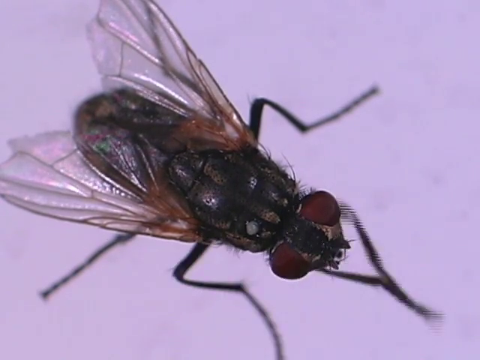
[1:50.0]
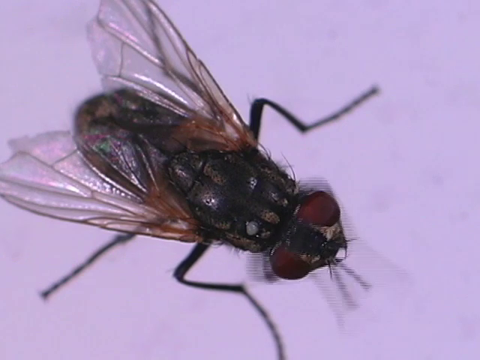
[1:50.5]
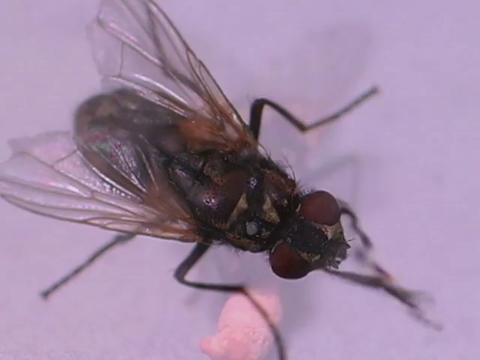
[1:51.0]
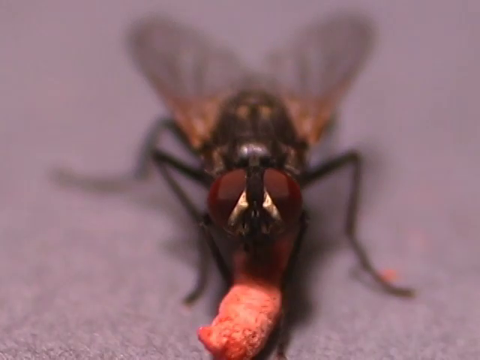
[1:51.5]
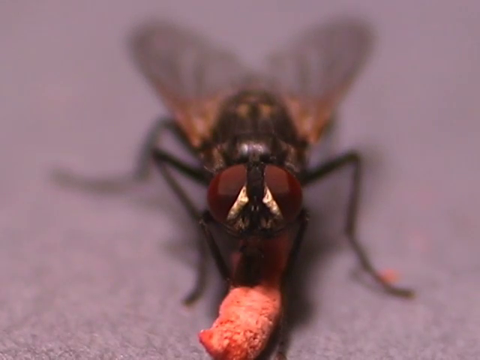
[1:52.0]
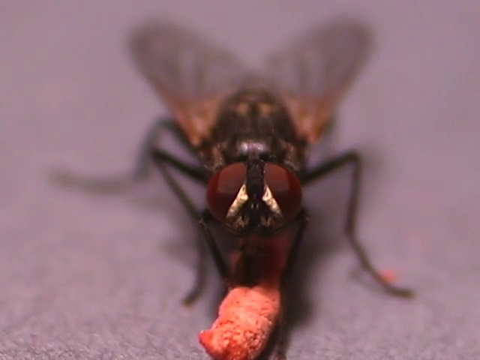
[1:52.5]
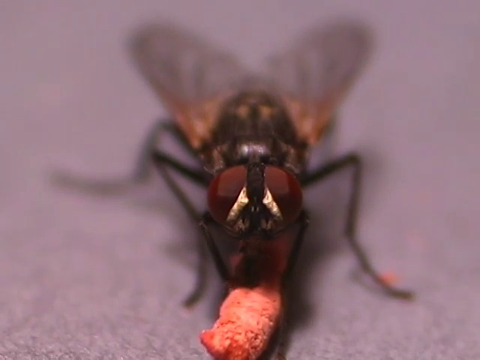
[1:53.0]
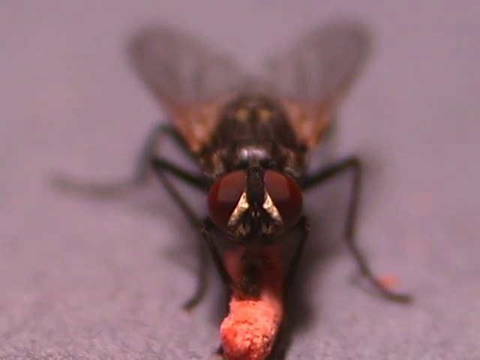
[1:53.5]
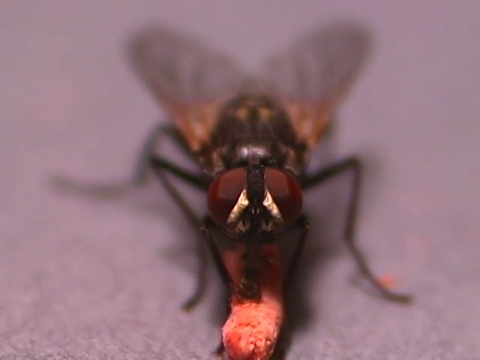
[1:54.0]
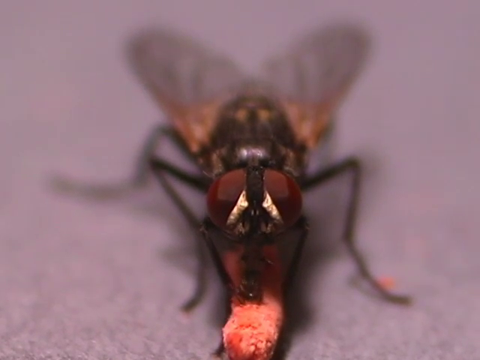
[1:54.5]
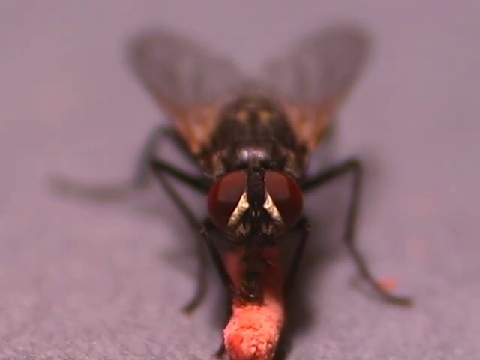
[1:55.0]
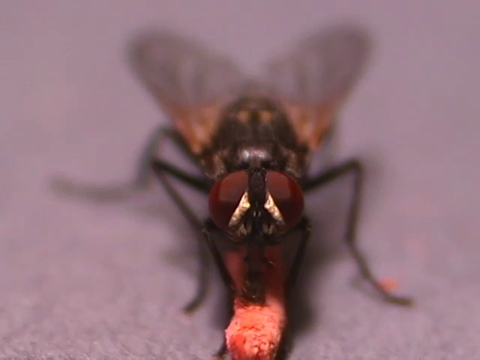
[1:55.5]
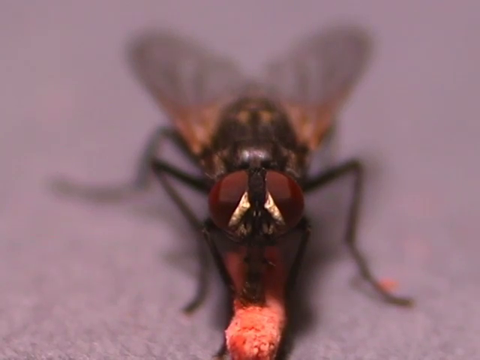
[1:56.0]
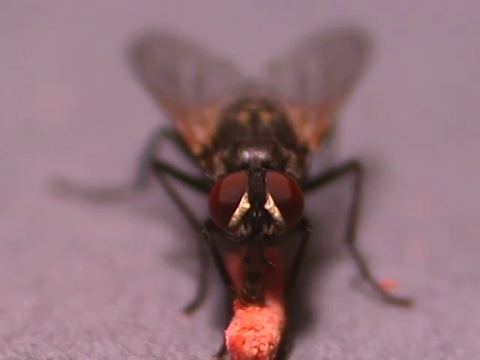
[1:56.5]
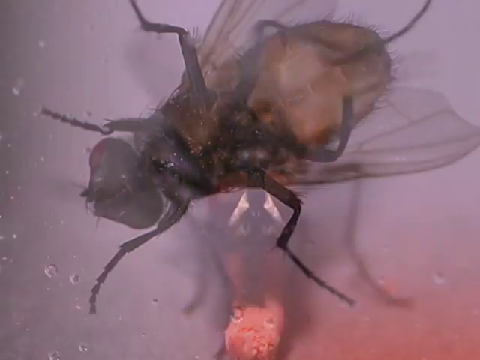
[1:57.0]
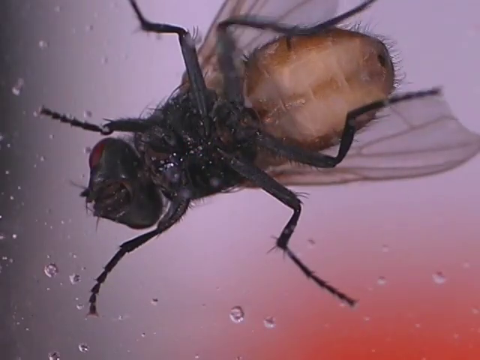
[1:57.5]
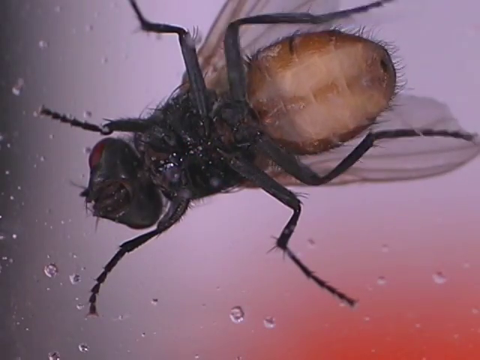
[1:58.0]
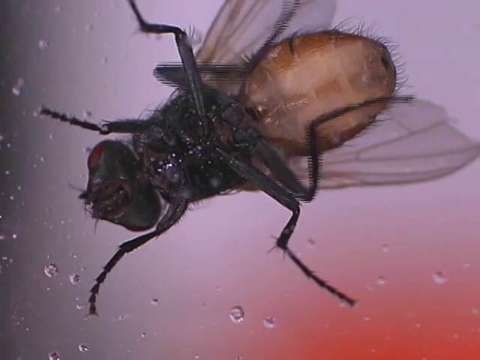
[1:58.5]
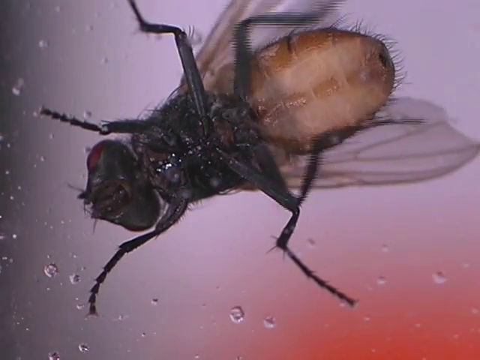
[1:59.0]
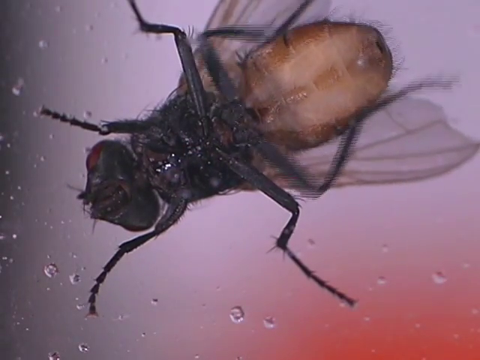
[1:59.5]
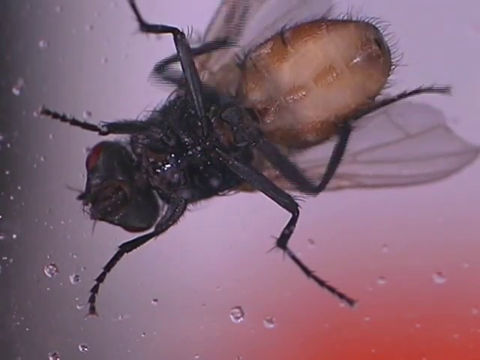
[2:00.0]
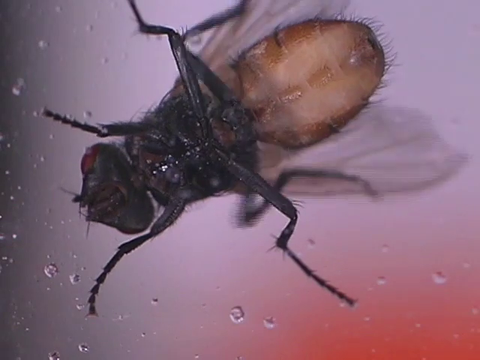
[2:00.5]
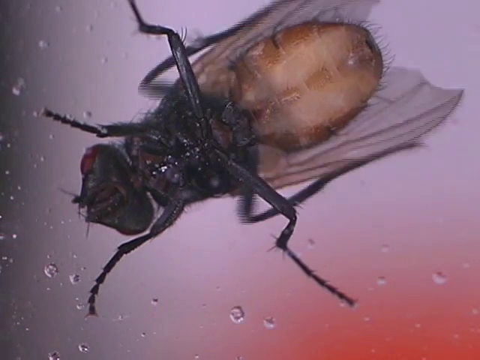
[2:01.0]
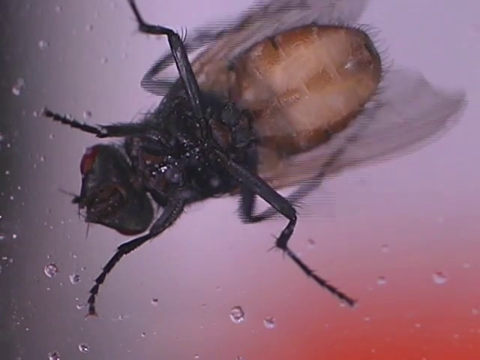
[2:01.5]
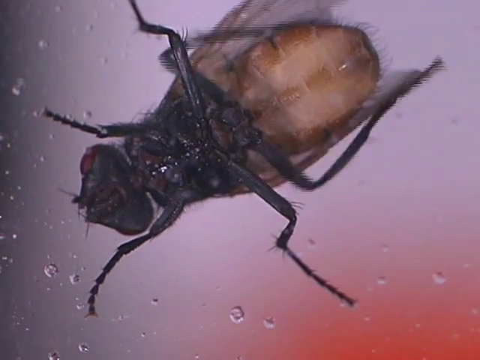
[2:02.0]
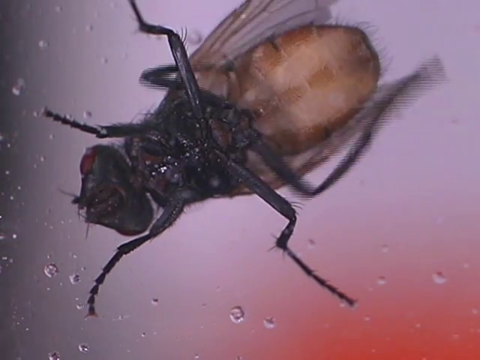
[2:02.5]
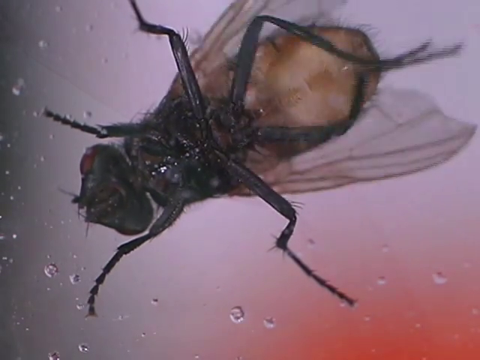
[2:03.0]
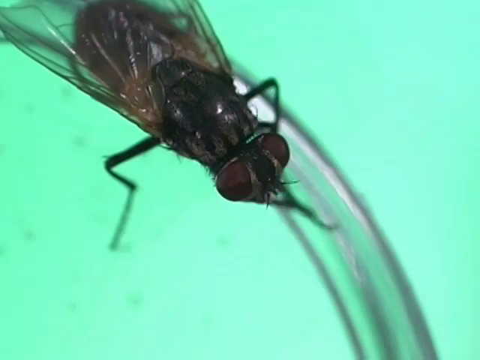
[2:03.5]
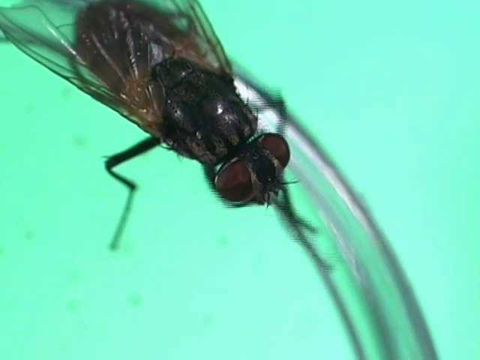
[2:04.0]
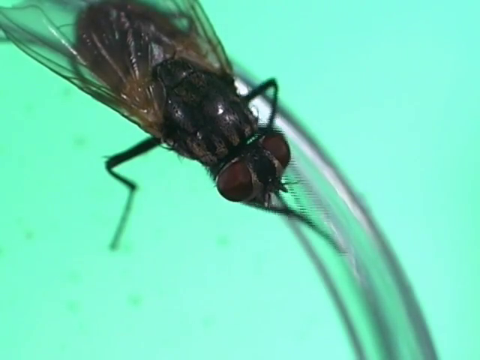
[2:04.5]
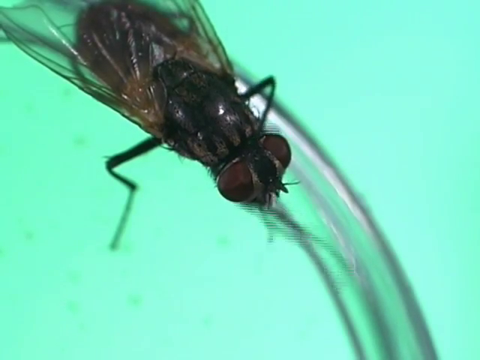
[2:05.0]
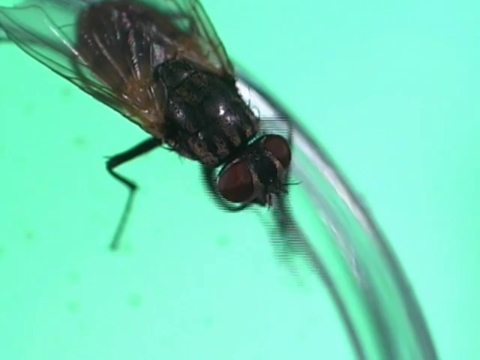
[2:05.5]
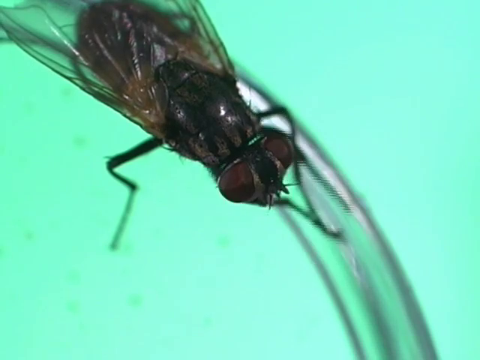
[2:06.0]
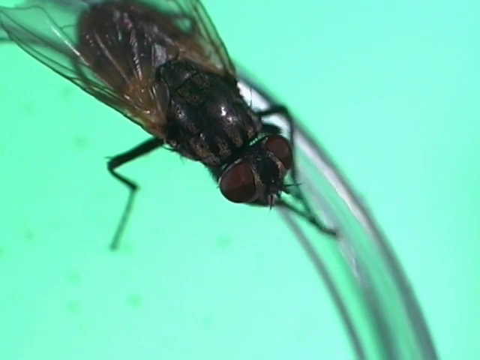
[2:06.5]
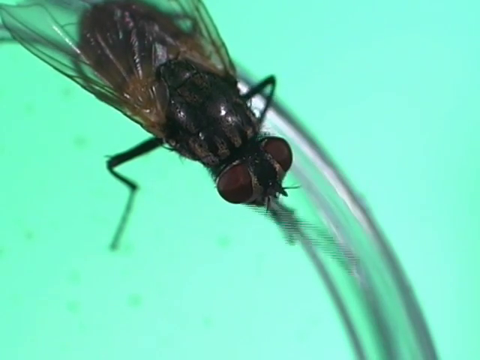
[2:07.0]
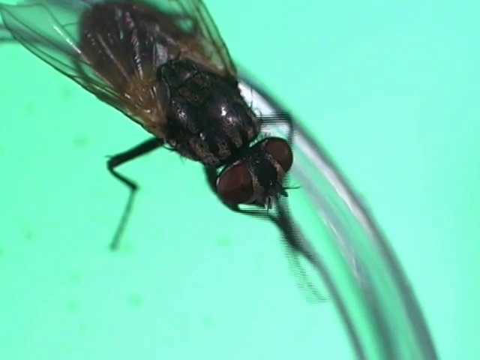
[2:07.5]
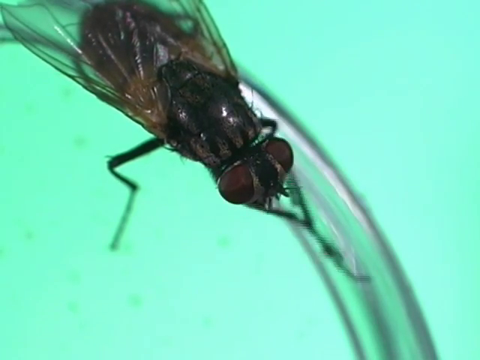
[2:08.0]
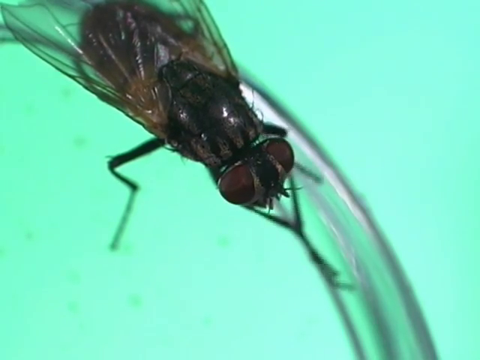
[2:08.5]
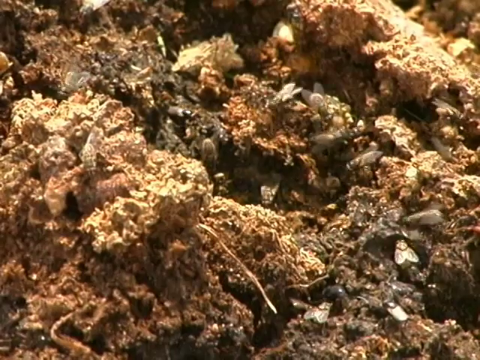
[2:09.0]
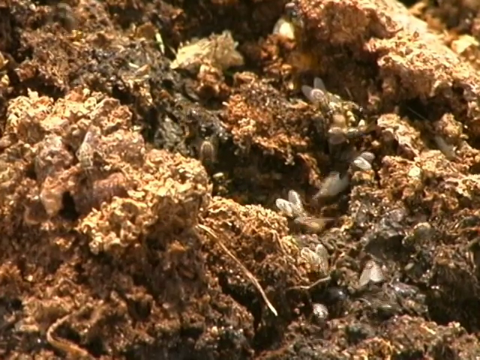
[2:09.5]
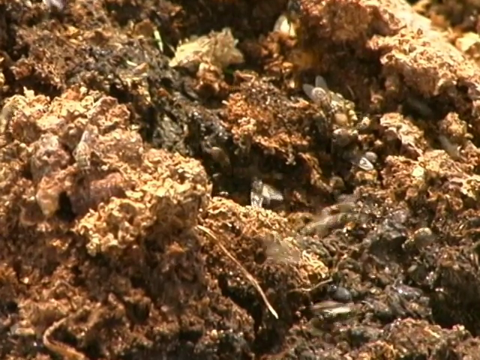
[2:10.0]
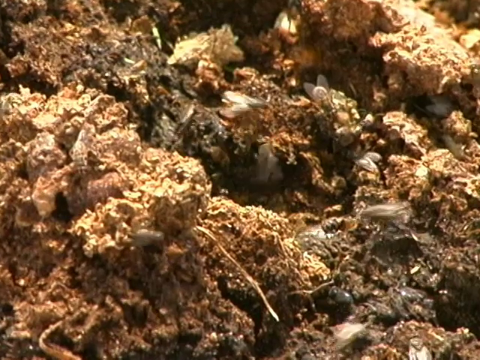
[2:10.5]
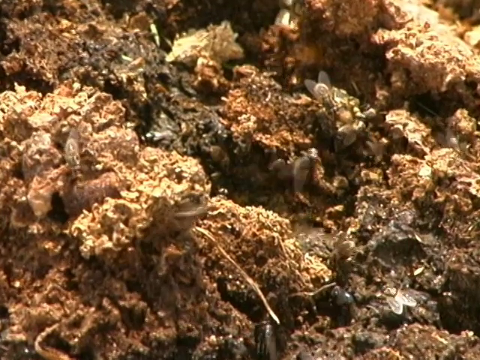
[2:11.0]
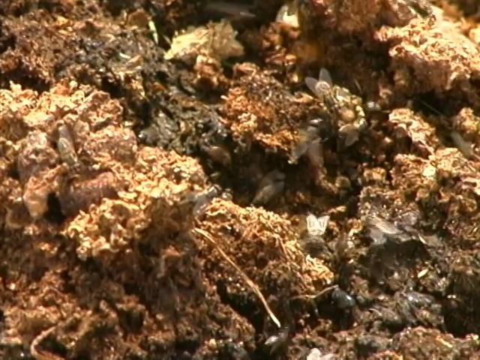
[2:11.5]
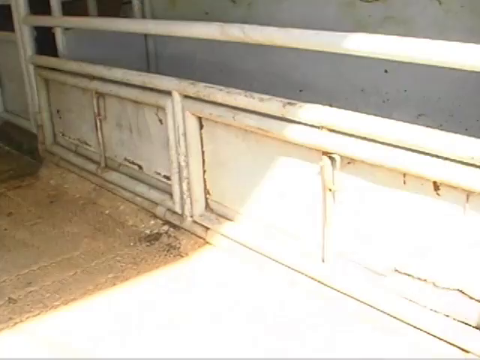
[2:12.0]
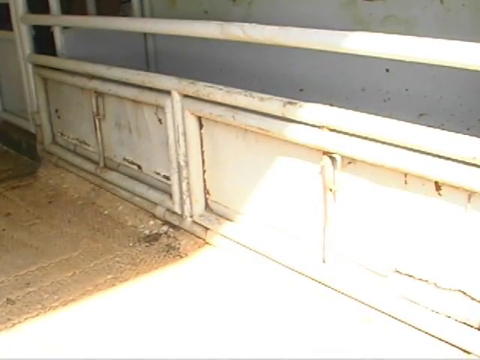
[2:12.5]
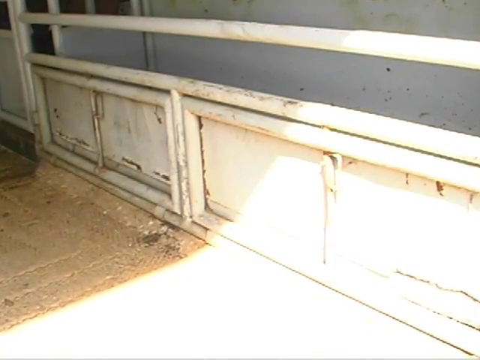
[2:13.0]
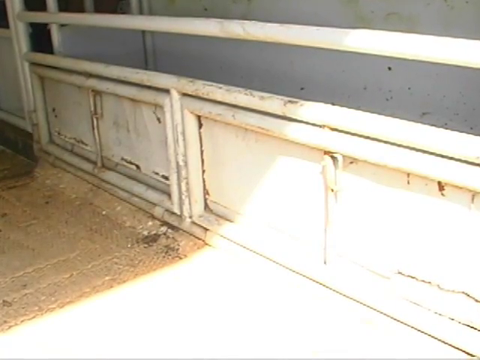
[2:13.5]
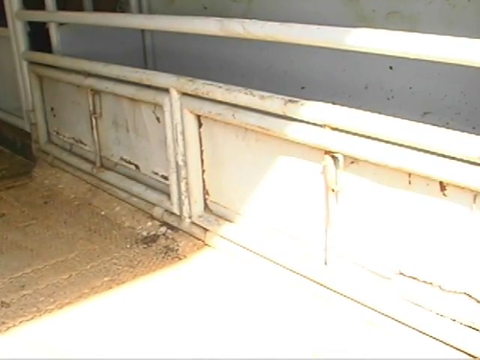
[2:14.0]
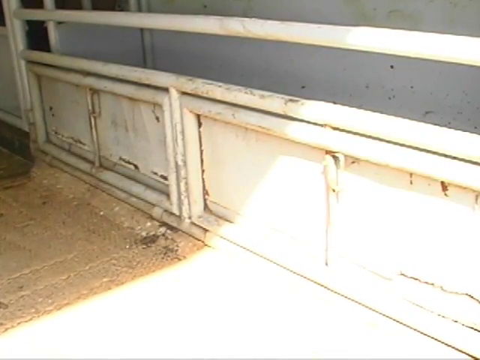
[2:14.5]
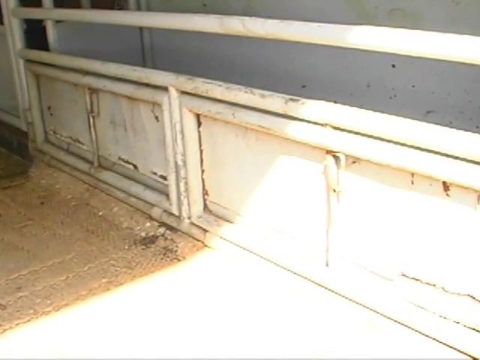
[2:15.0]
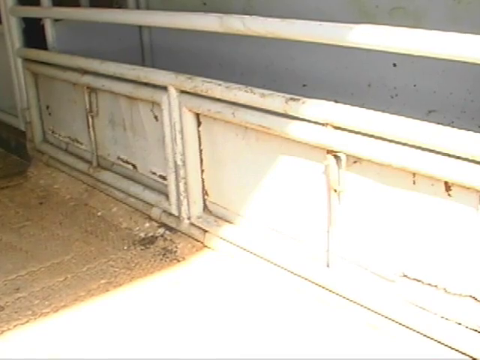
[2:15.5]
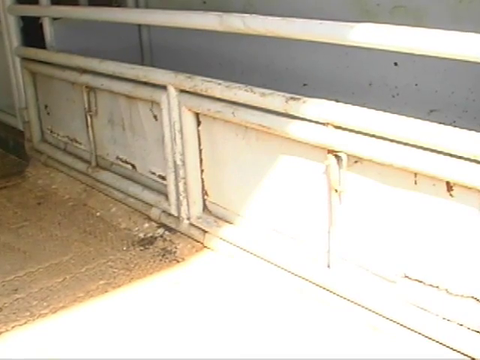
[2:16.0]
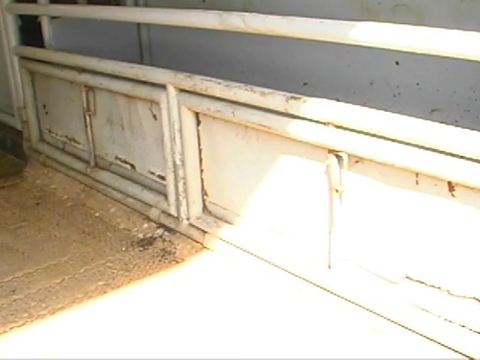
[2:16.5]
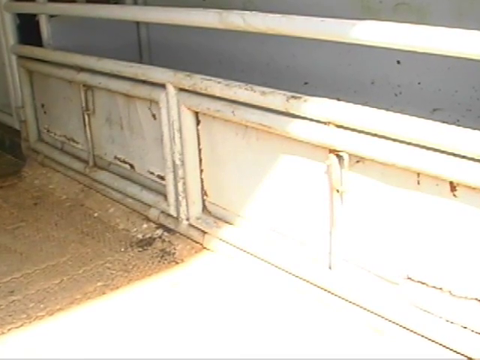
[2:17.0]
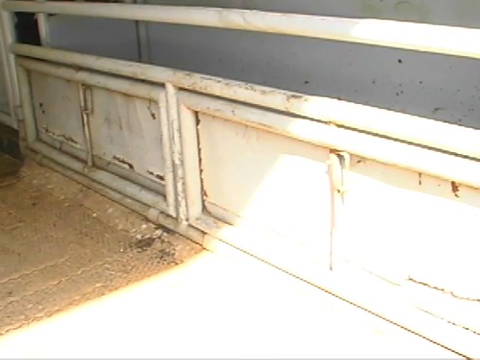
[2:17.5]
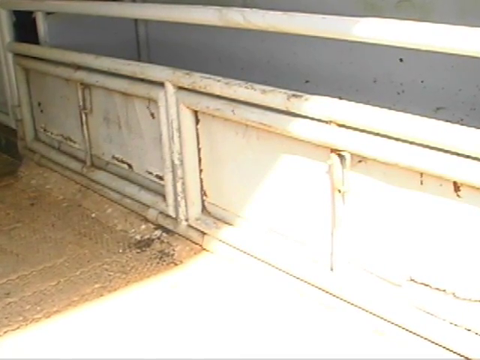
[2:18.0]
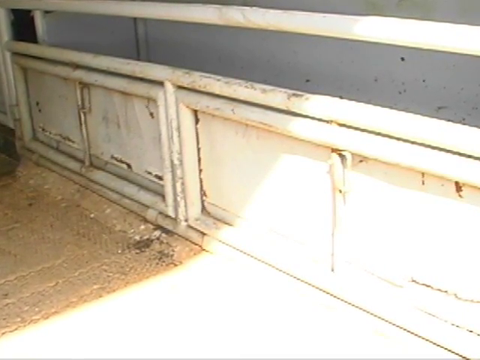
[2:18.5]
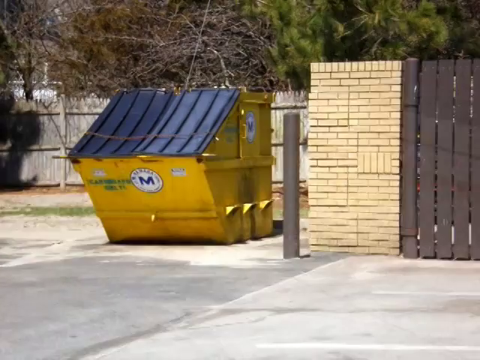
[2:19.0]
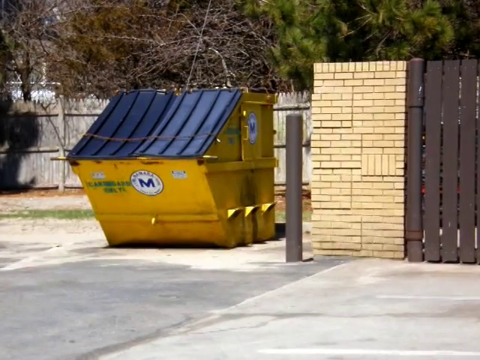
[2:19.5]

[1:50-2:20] A series of different images of flies is shown. An overhead close-up shows a fly rubbing its front legs together. A close-up front view shows a fly that appears to be holding something in its front legs and licking or projecting something out onto it. A fly on glass is filmed from underneath, its back legs moving back and forth and rubbing together. Another overhead close-up shows a fly moving its front legs together. There are also images of what looks like a clump of dirt with maggots in it and flies flying around it. Then comes what looks like the outside of a metal wall that looks slightly dirty. Finally there is a view of a blue and yellow dumpster in what looks like a parking lot.